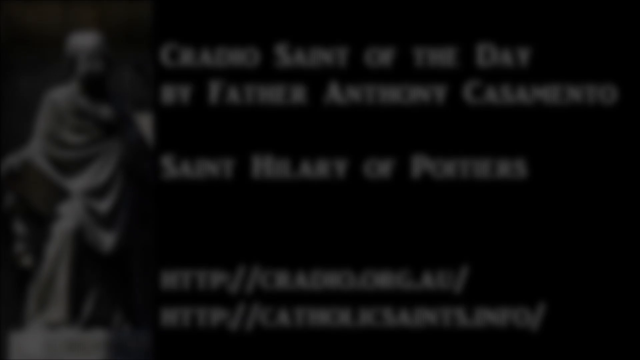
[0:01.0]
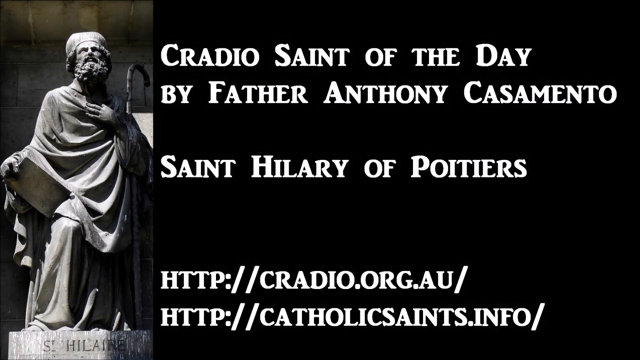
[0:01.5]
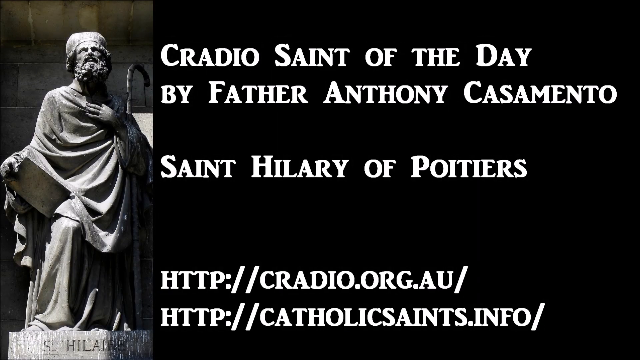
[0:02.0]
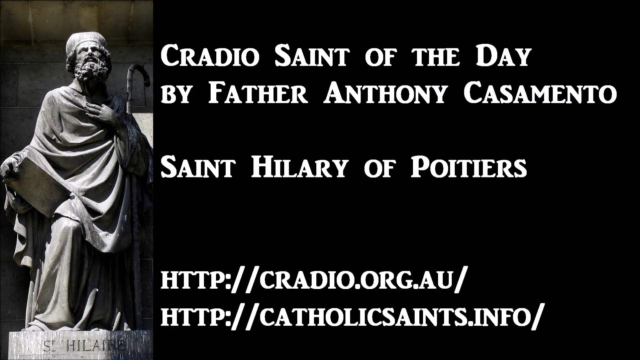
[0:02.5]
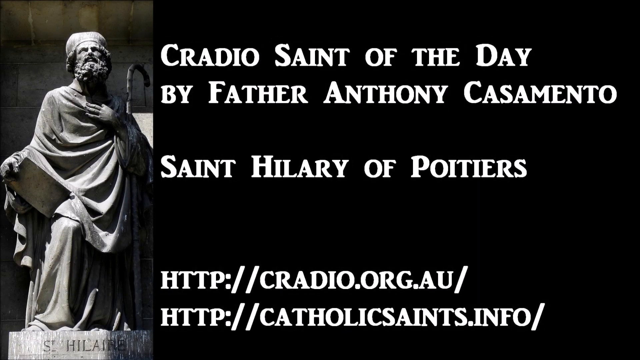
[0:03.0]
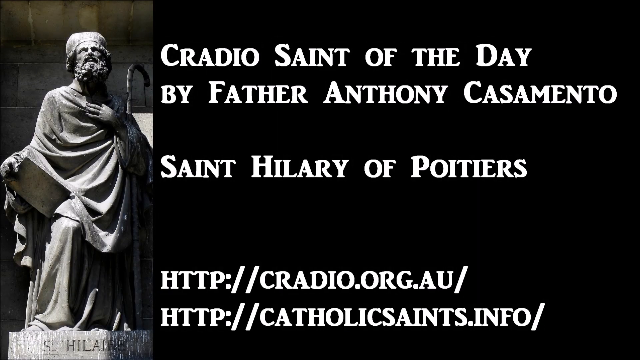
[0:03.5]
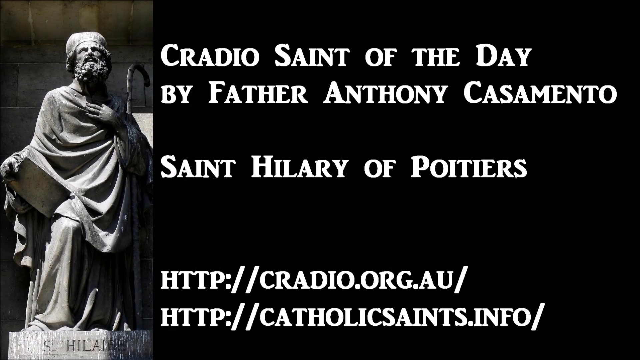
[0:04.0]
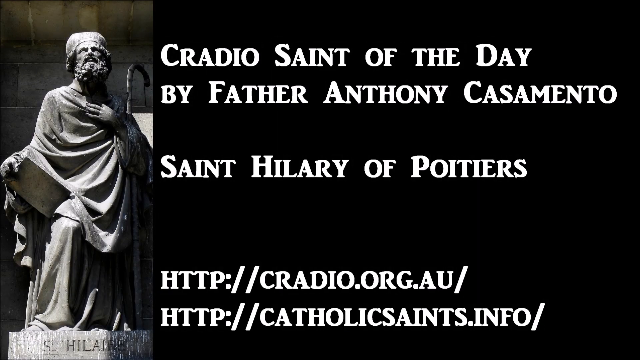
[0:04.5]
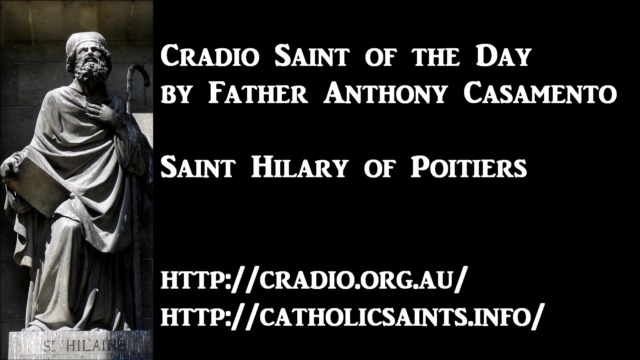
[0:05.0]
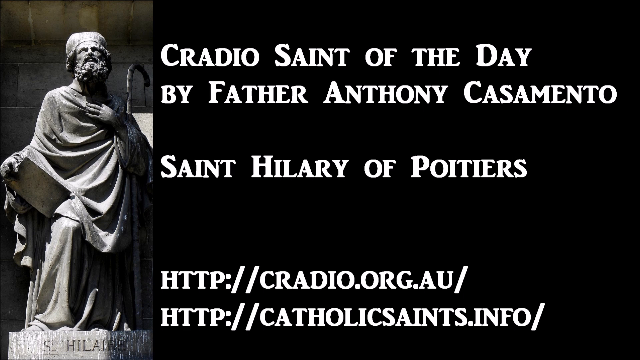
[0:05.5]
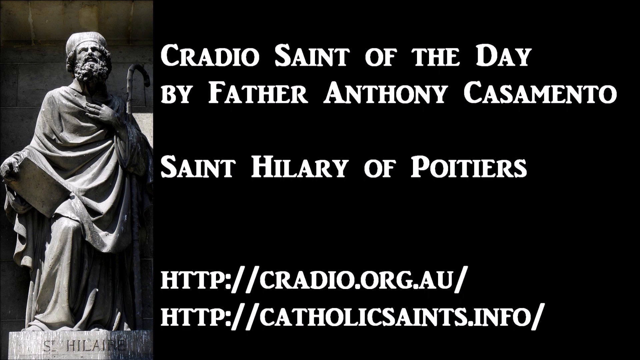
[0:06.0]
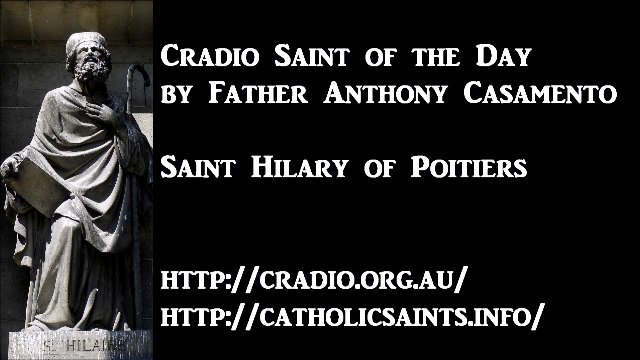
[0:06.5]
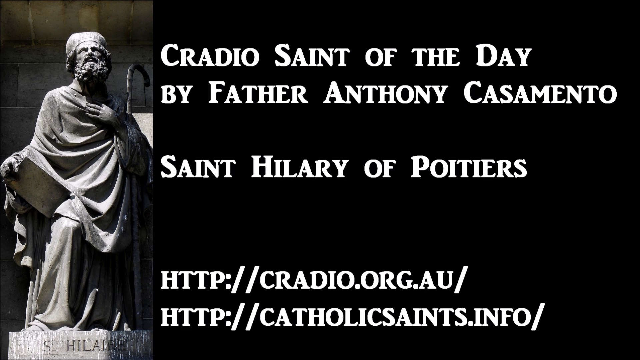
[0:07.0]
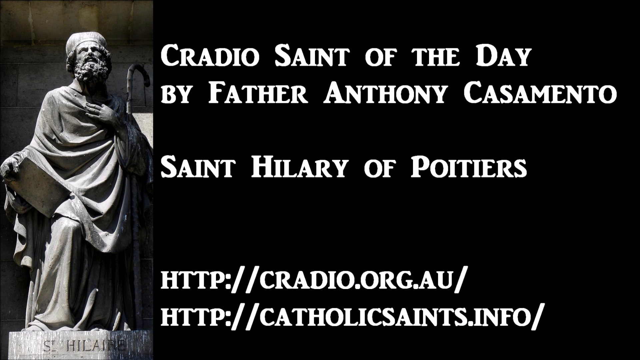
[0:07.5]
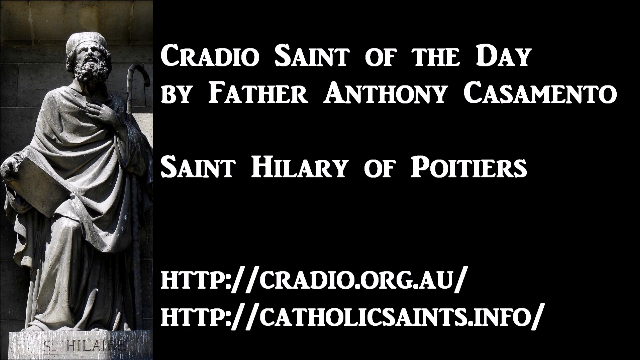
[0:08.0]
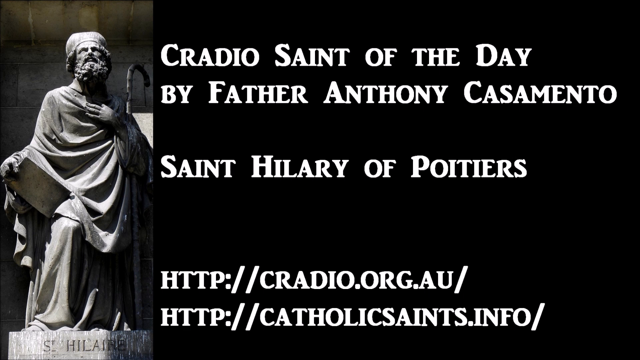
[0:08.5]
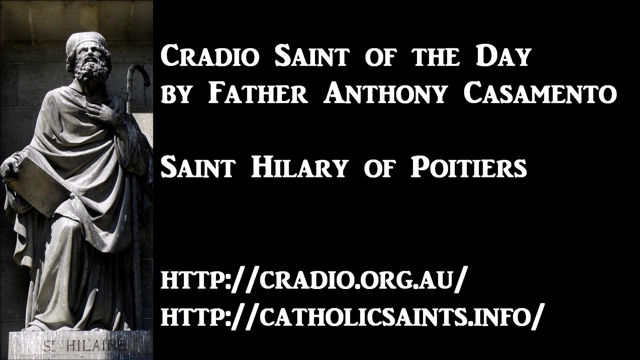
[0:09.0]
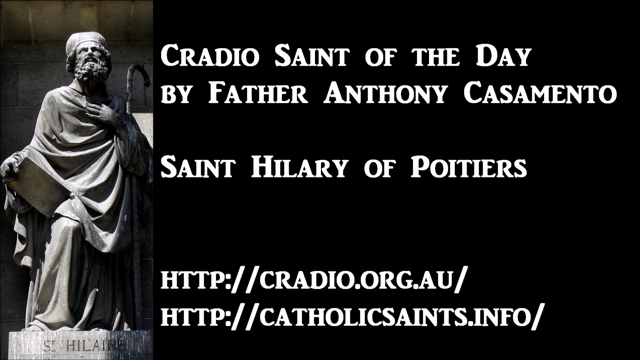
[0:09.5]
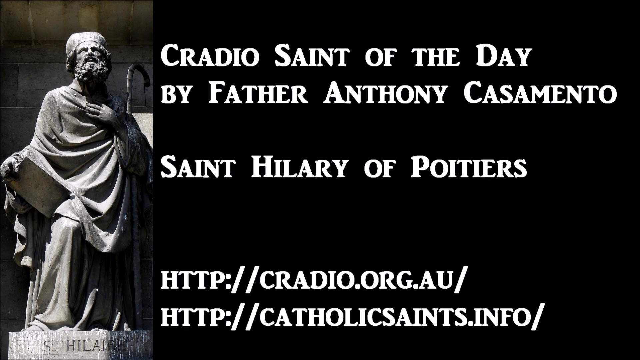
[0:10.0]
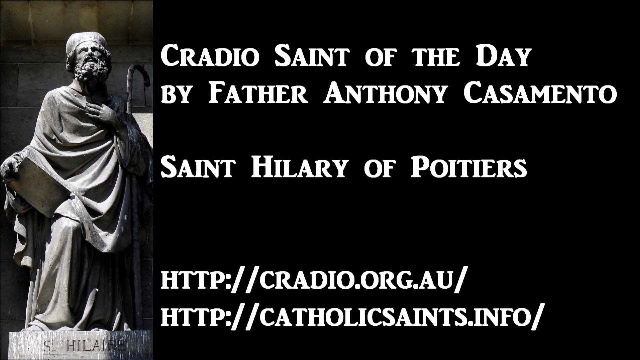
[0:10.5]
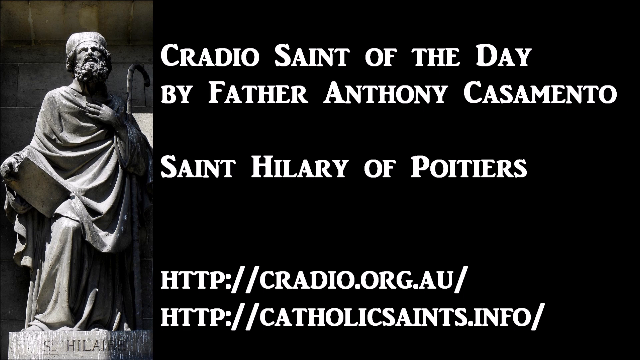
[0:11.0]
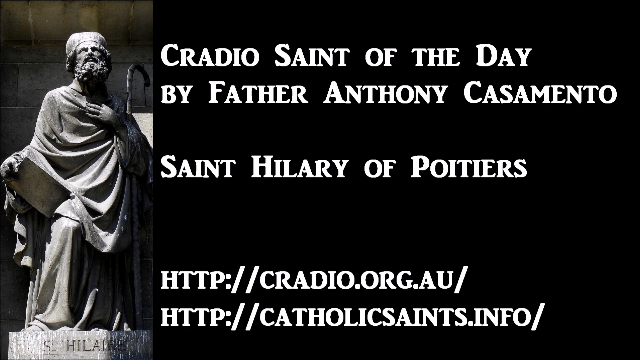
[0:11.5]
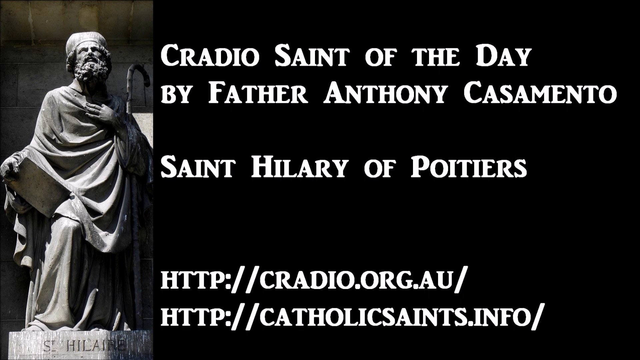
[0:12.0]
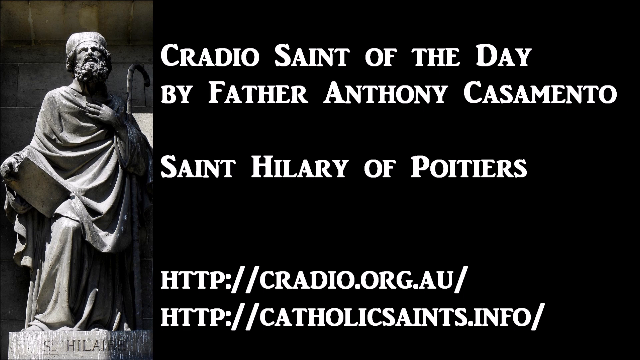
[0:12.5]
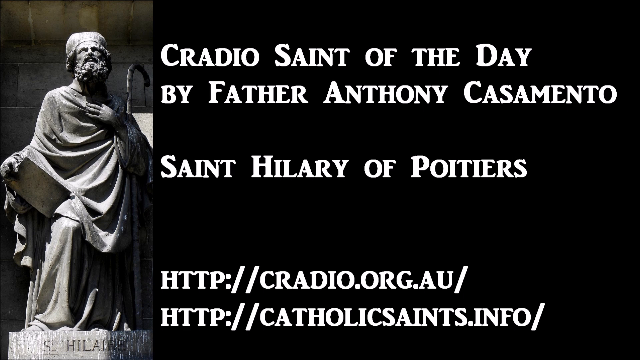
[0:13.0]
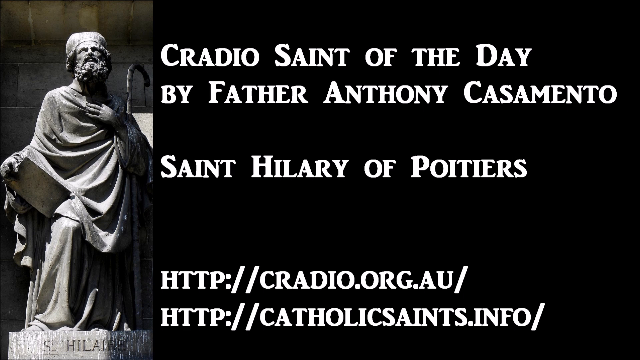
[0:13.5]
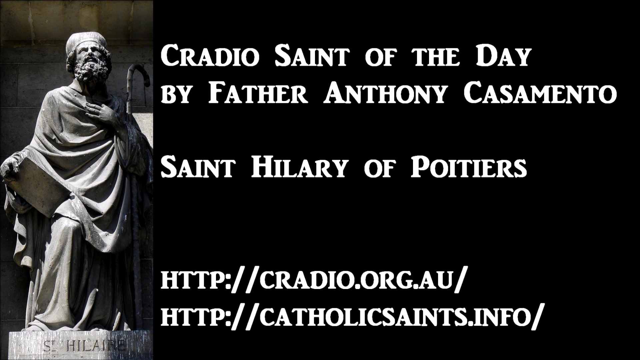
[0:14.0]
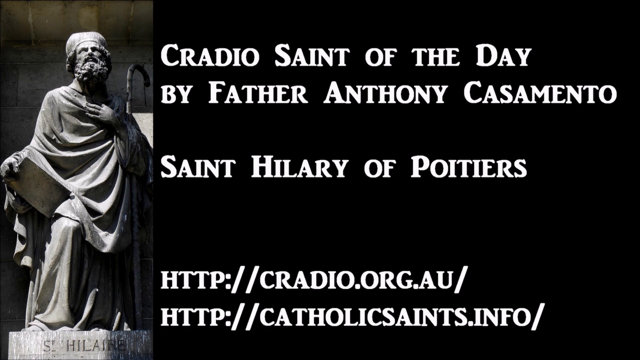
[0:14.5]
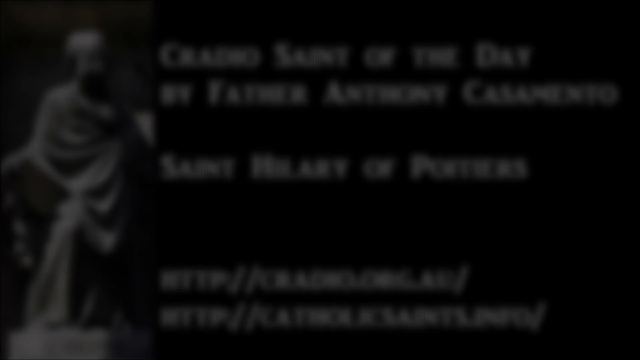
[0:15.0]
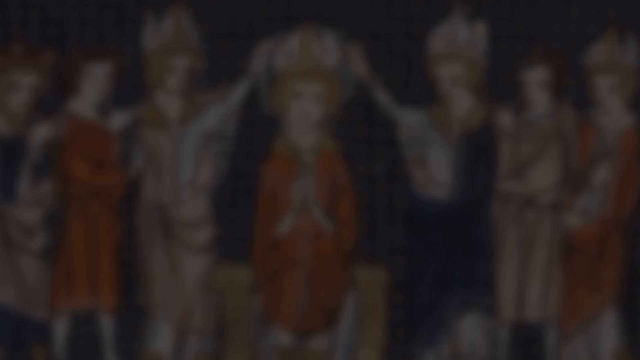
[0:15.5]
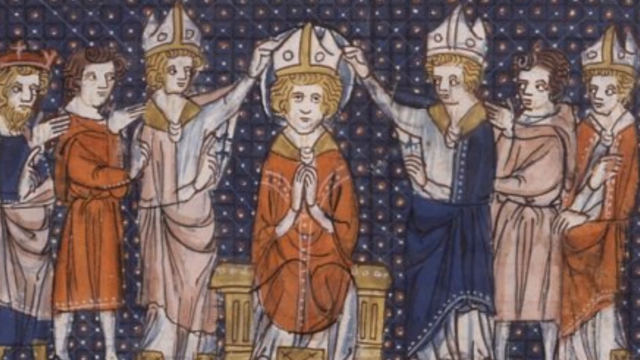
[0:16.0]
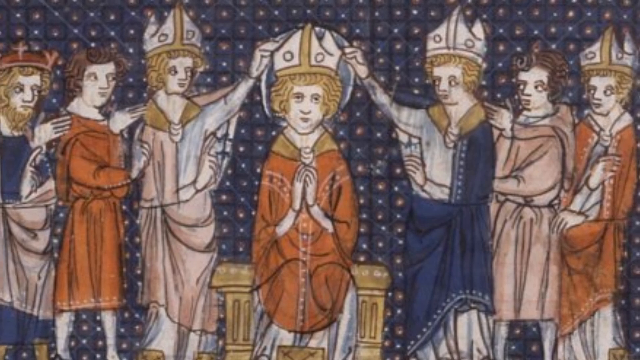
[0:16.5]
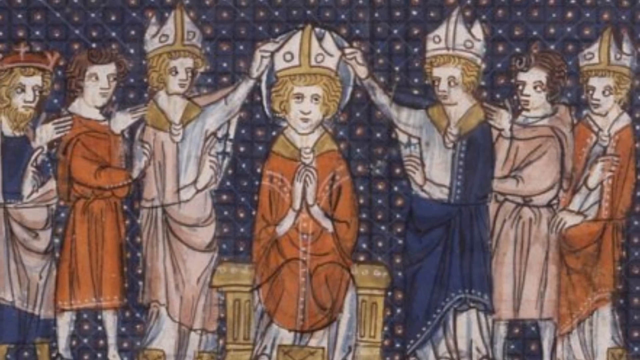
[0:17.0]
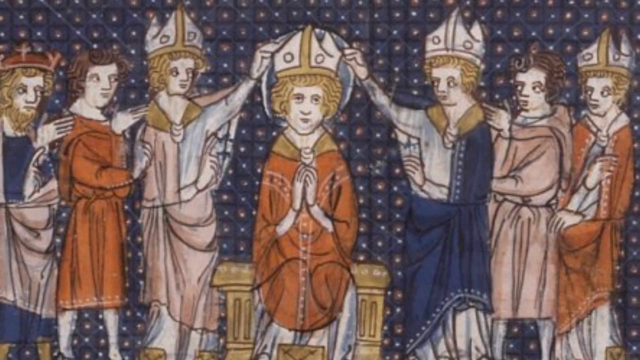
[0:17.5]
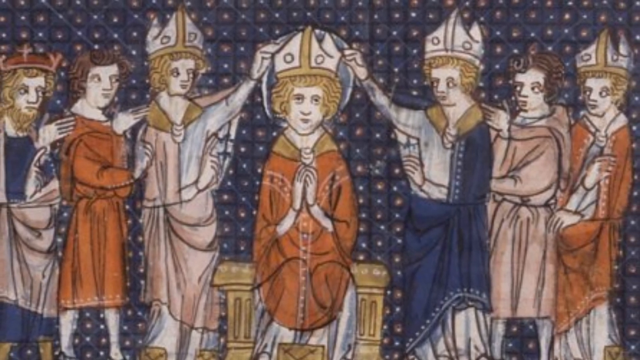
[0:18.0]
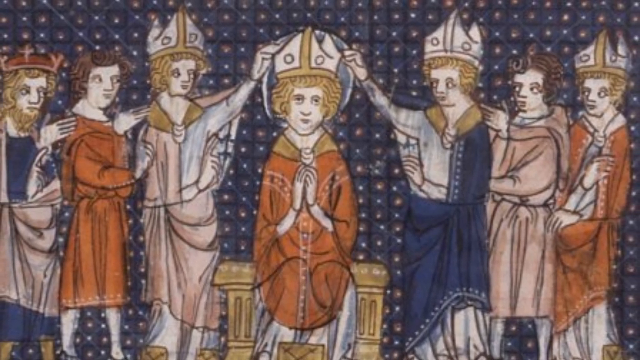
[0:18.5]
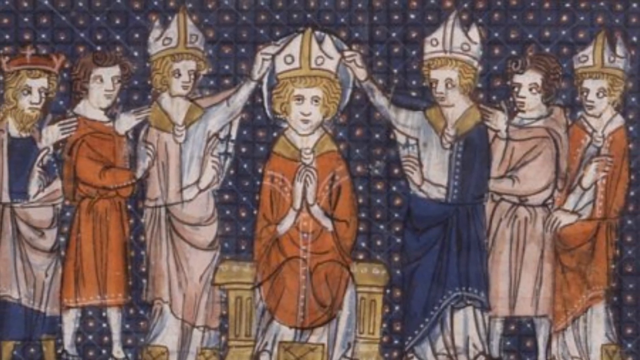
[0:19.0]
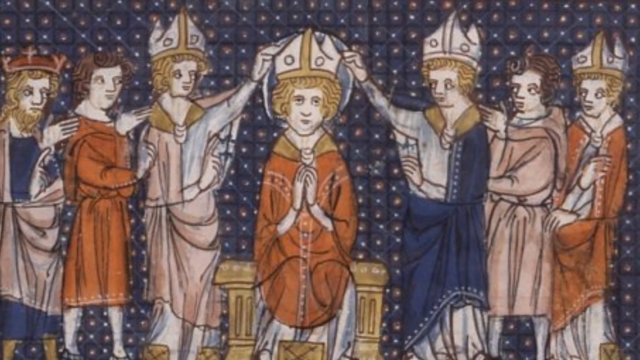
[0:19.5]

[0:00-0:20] The video is the Cradio Saint of the Day, by Father Anthony Casamento, about Saint Hilary of Patiers, so it is probably from the Catholic Church. A gray statue appears: the figure has a tall cane, maybe a staff, and looks like he is maybe holding a book. He wears a robe with a covering over it and something that looks like a shower cap, though it apparently is not one. He has a beard and mustache. His left hand is up on his chest, his right hand holds some kind of paper, and his right knee sticks up a little. Underneath, text apparently reads "St. Hilary." The image fades out, and next comes an artwork showing seven people. The one in the middle could possibly be God. Three men are on the left and three on the right, surrounding the one in the middle. Of the seven men, five have blonde hair and two have darker hair. Five wear hats: four have similar hats and one has a different hat, while the two with dark hair have no head covering.